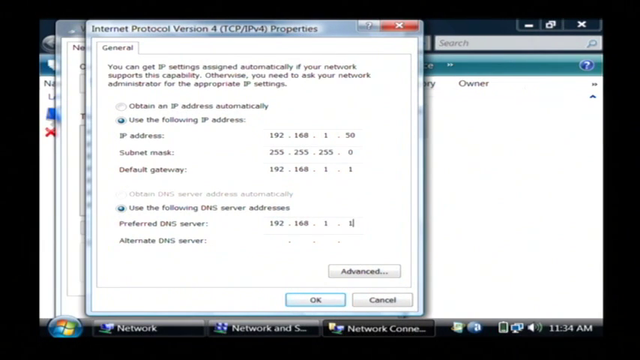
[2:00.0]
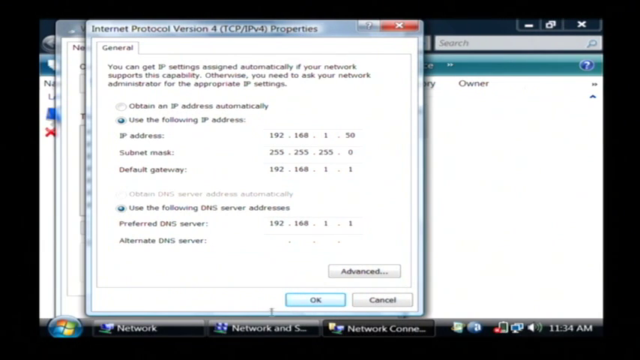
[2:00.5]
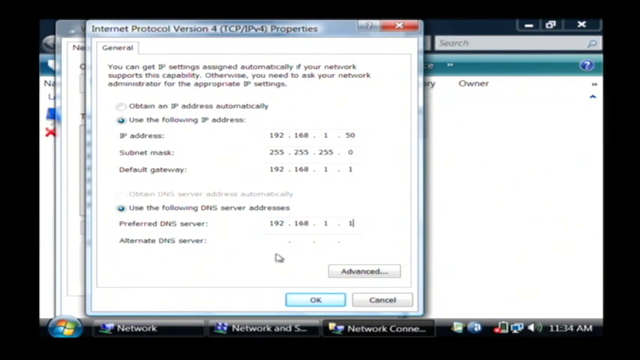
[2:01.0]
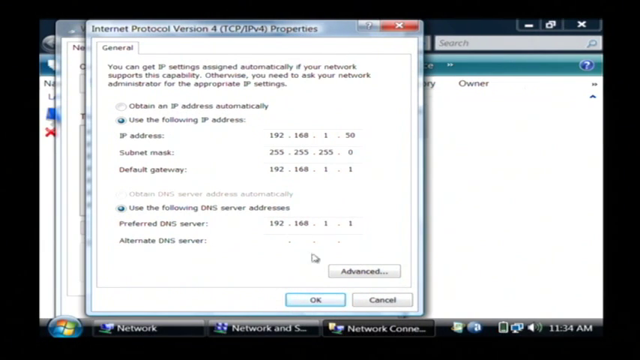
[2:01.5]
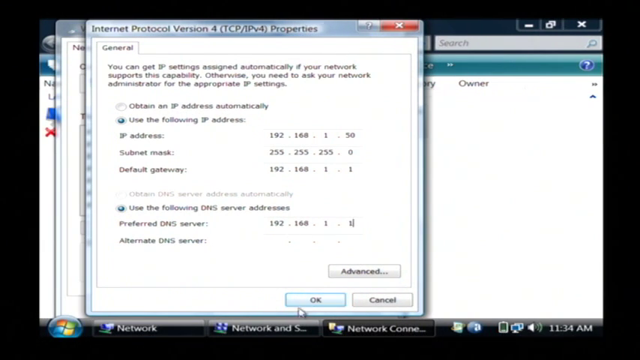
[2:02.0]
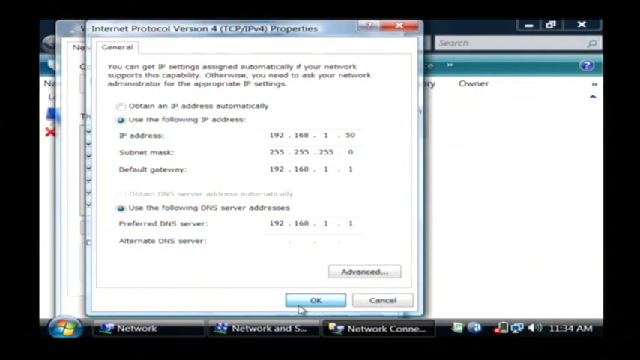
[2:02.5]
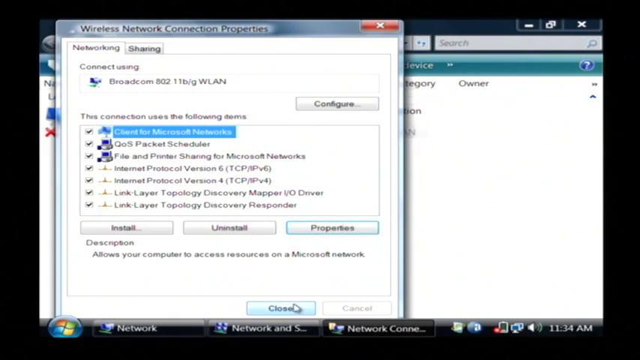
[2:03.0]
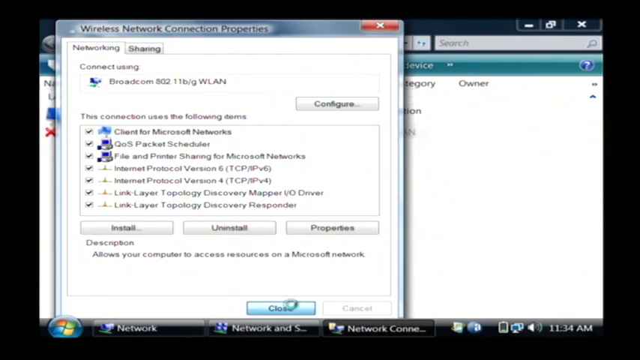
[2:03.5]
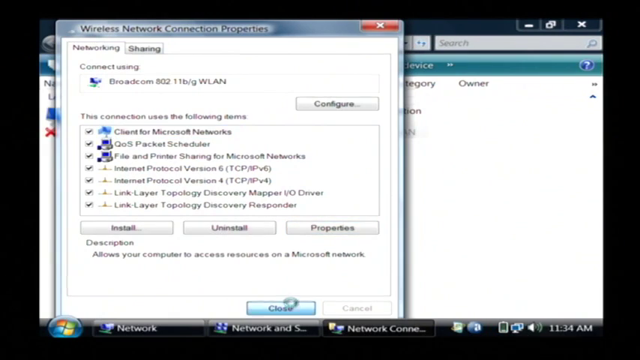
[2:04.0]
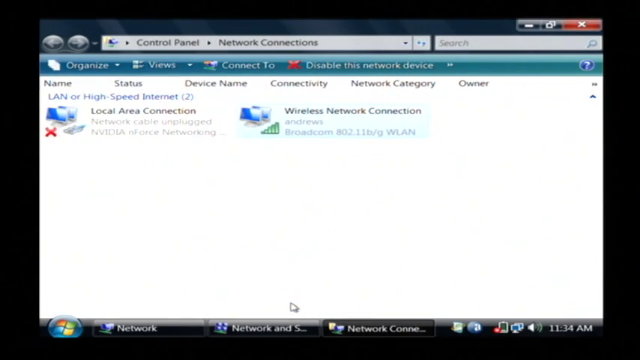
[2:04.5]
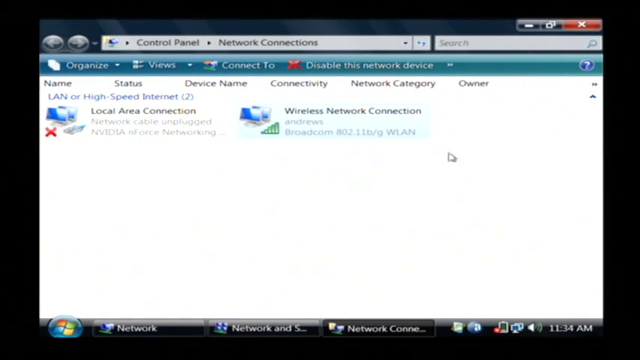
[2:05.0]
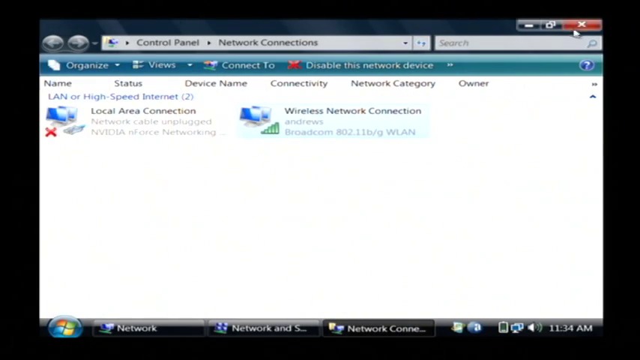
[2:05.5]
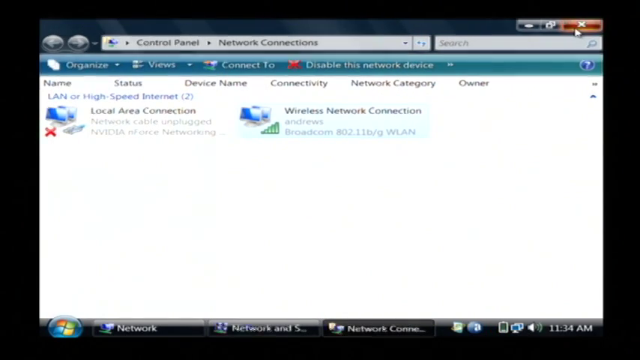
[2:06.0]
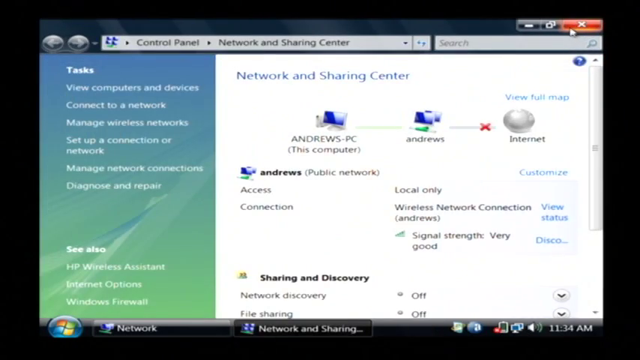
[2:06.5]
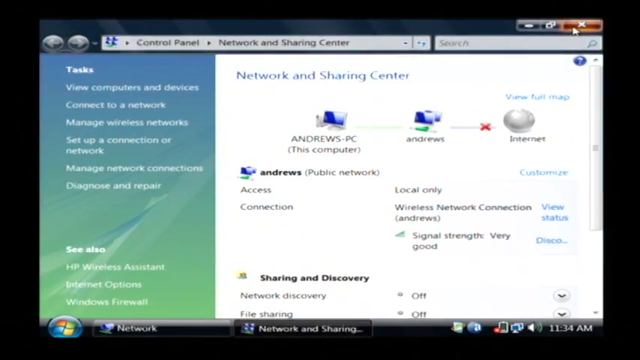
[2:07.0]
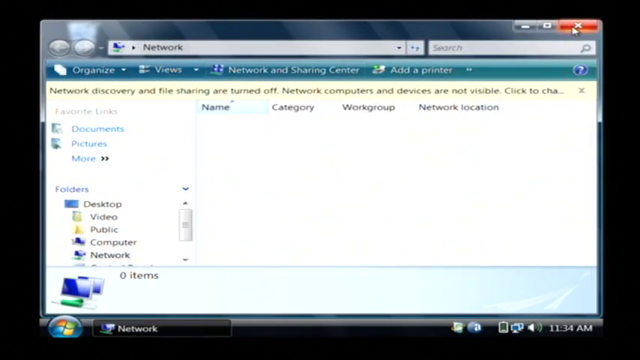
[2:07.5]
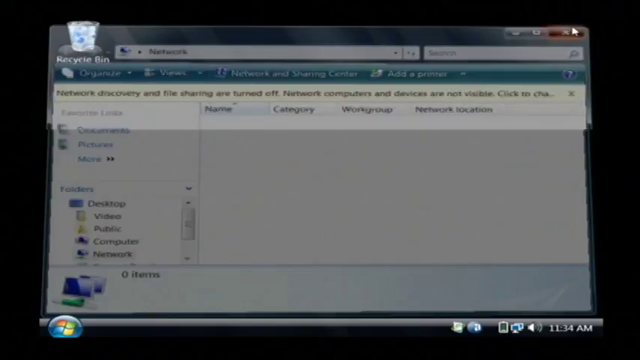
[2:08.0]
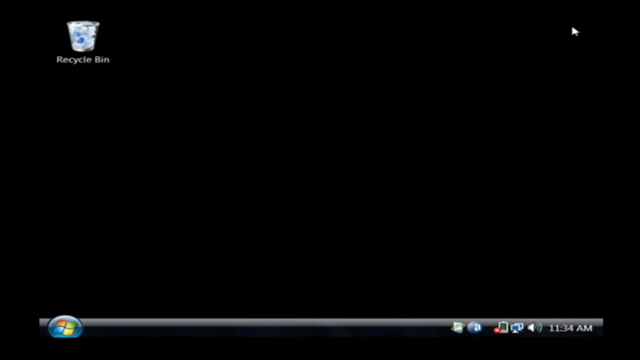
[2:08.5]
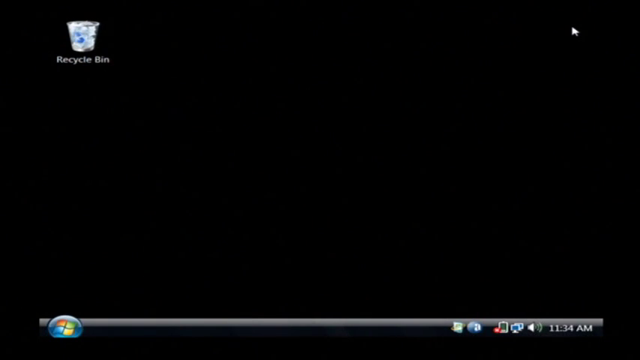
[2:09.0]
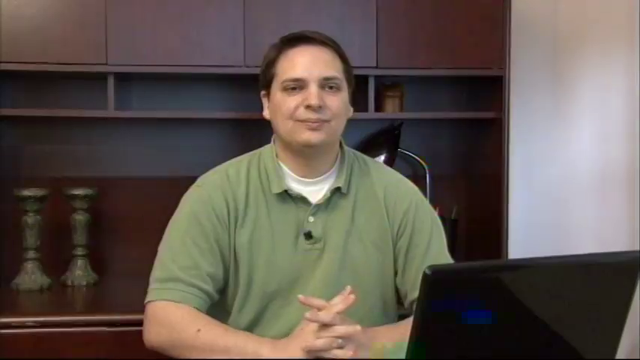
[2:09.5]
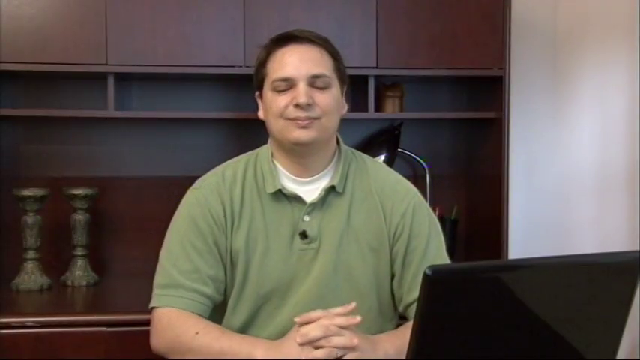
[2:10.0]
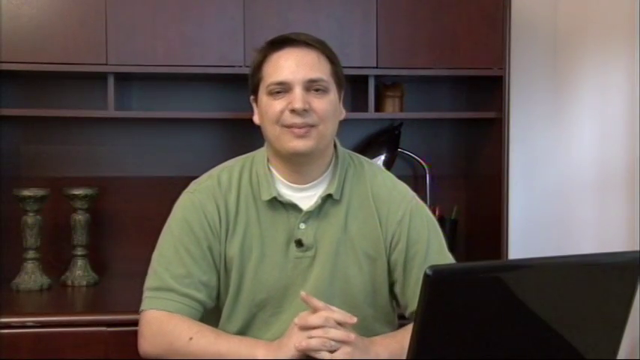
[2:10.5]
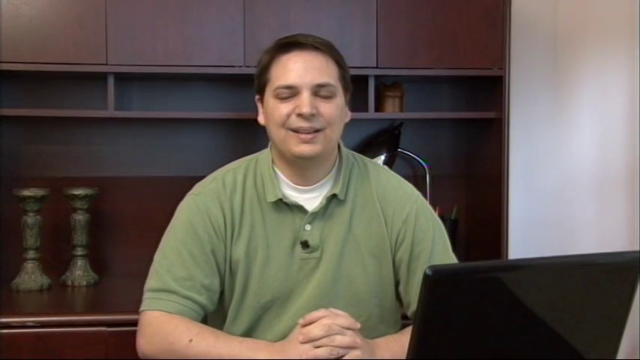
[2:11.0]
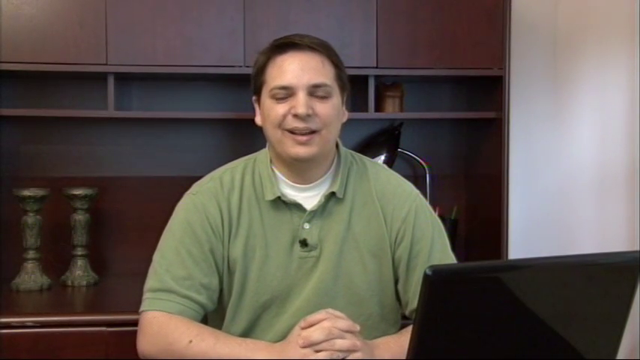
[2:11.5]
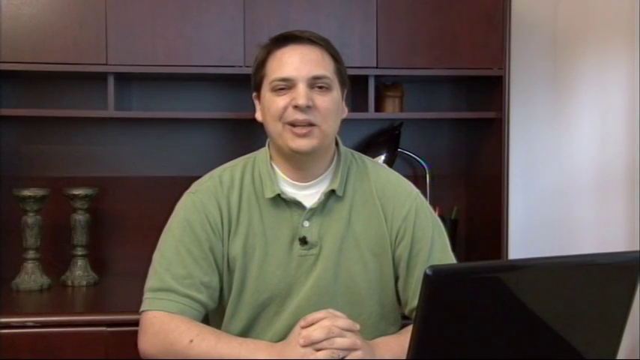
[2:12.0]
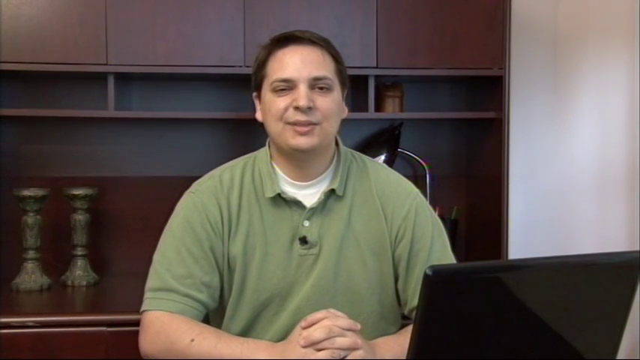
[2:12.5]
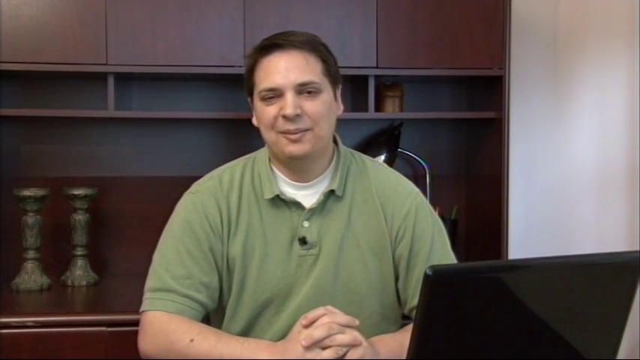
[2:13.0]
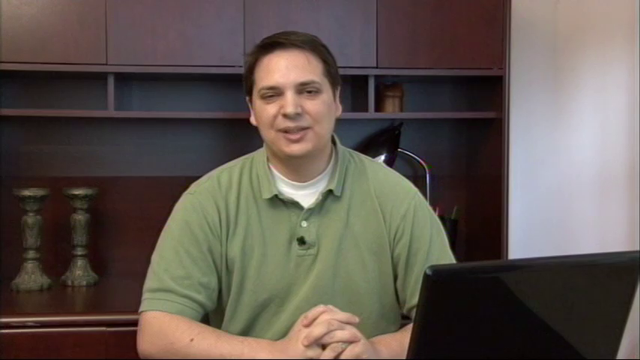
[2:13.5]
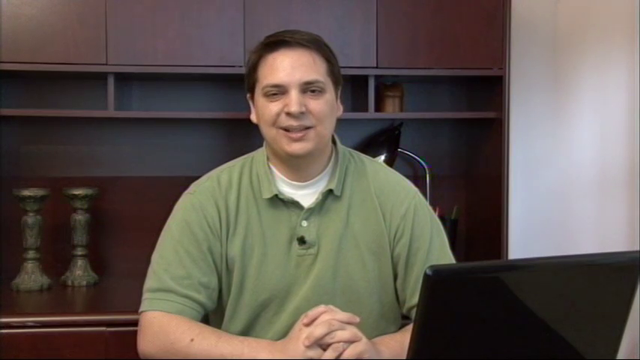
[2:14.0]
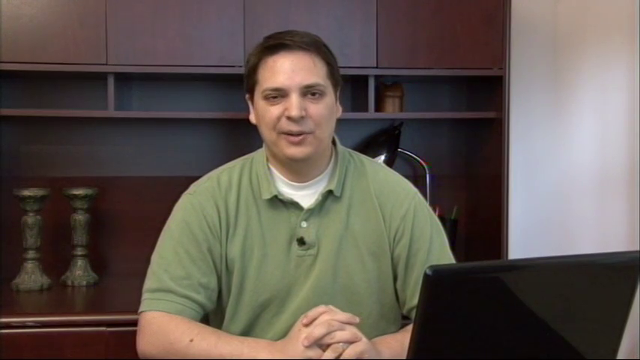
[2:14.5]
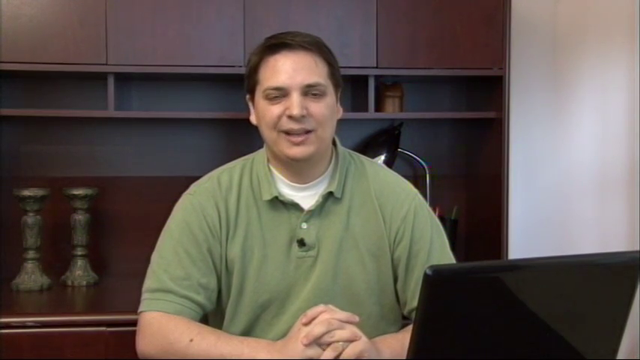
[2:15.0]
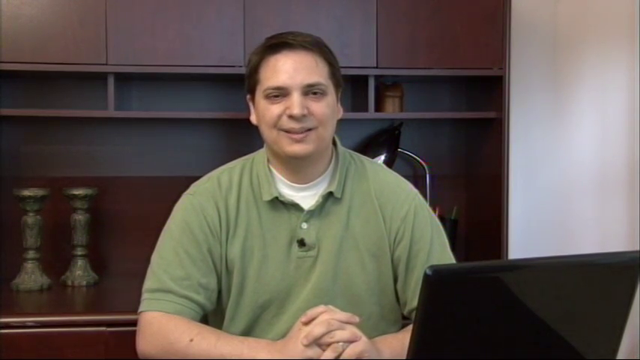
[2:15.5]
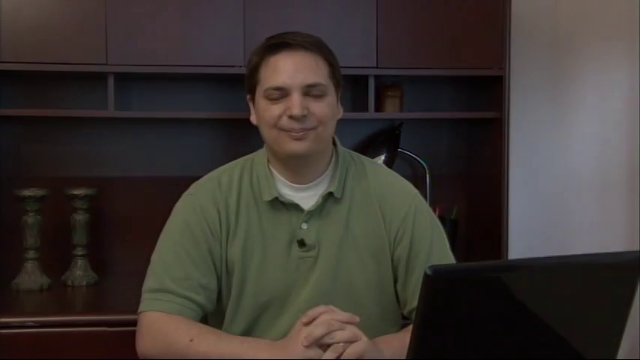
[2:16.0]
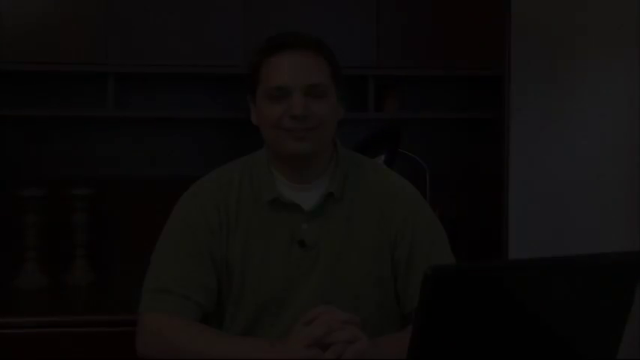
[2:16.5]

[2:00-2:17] The Internet Protocol Version 4 window remains open. The mouse circles around highlighting, then clicks OK, leaving the Wireless Network Connection Properties window. The mouse hovers across Close and clicks it; Close becomes blue, a circle spins, and the window closes. The original Control Panel program window is open, reading "Control Panel, Network Connections", with a search bar. Above that are a minus bar, an expansion button and a red X. The mouse moves up to the red X and clicks it, and all windows of the program close, showing the black background of the computer screen with the recycle bin in the upper left-hand corner. The camera then cuts to the gentleman sitting at the desk in front of the wooden shelving unit. He is smiling, his hands folded in front of him with his arms on the desk, as he looks into the camera and speaks. He gestures and nods his head gently. The screen then fades to black.